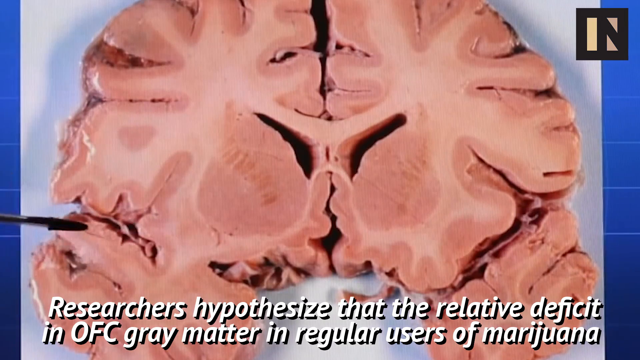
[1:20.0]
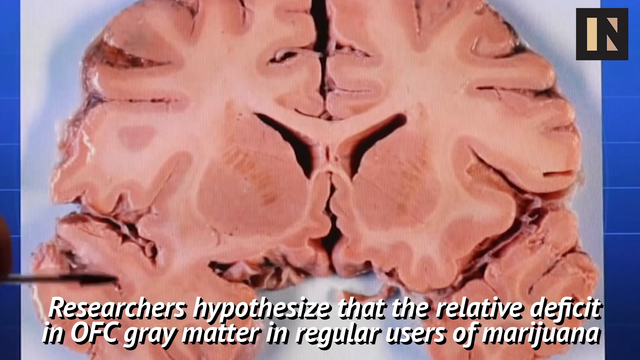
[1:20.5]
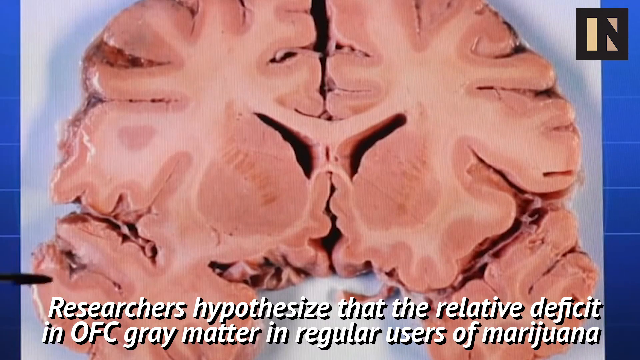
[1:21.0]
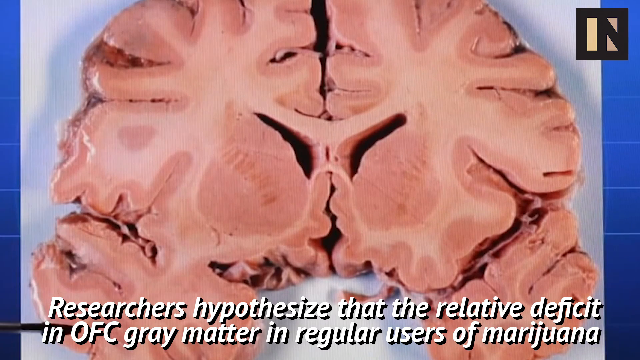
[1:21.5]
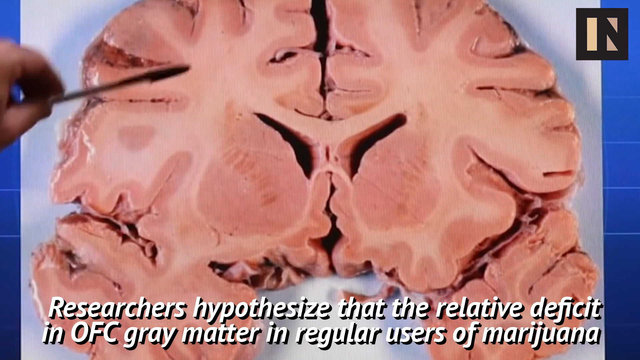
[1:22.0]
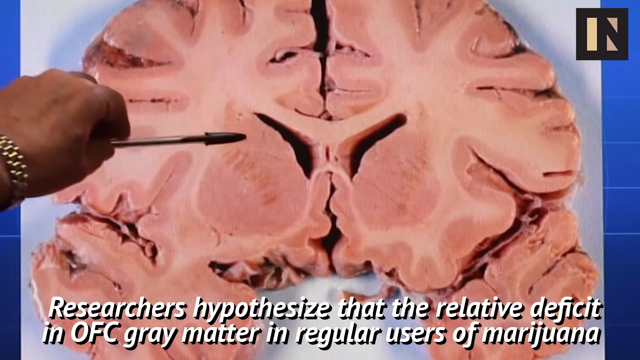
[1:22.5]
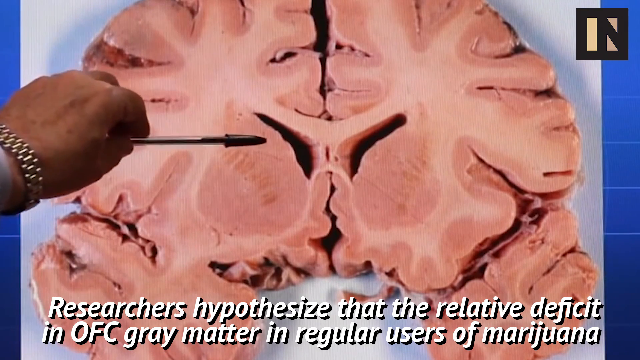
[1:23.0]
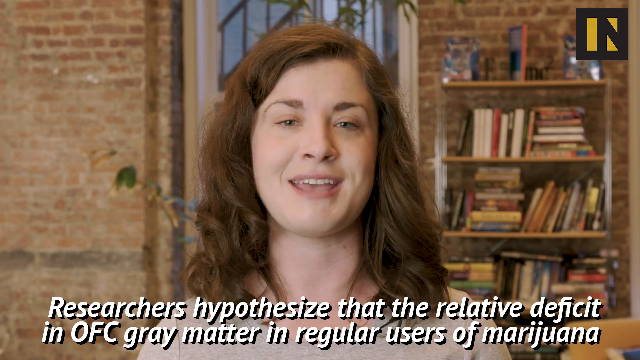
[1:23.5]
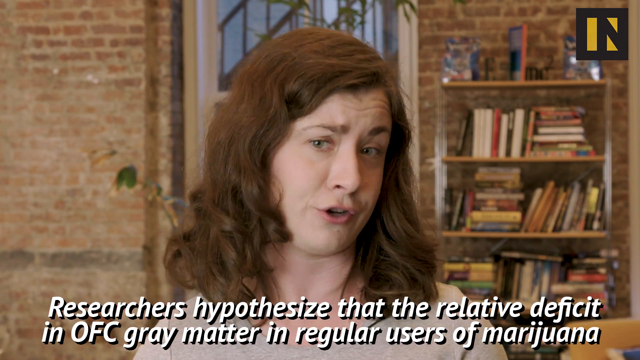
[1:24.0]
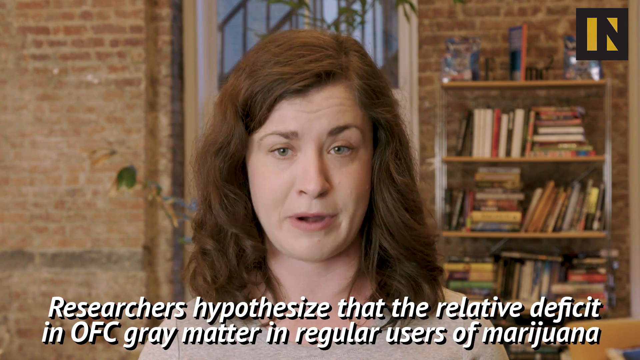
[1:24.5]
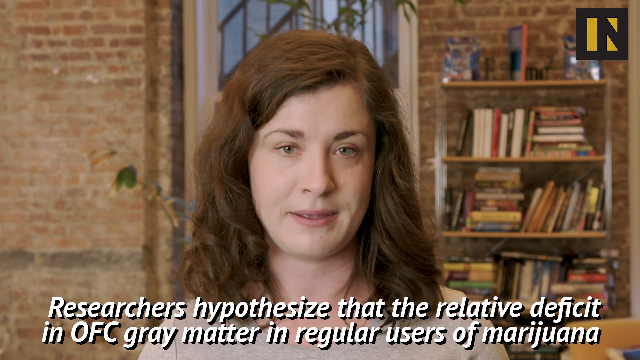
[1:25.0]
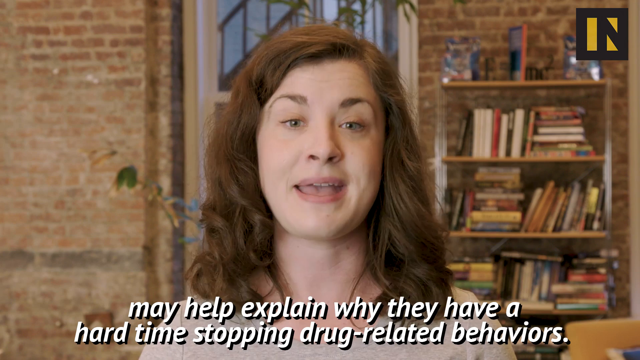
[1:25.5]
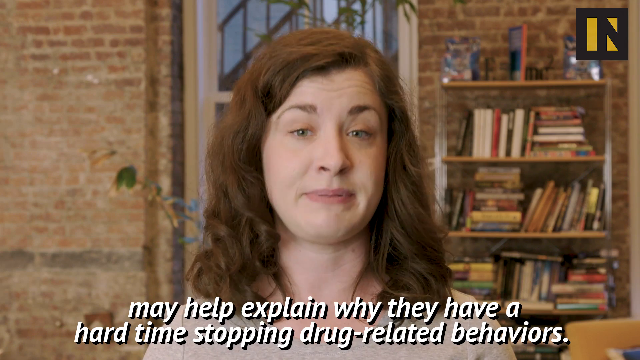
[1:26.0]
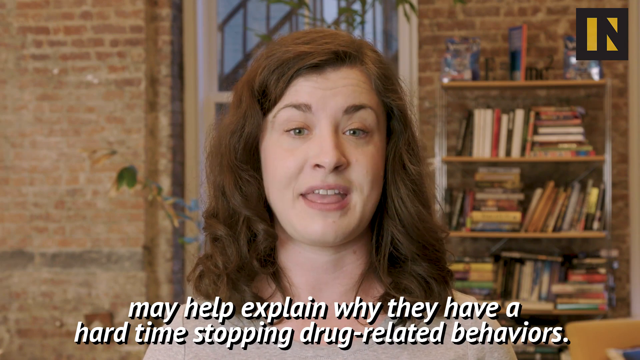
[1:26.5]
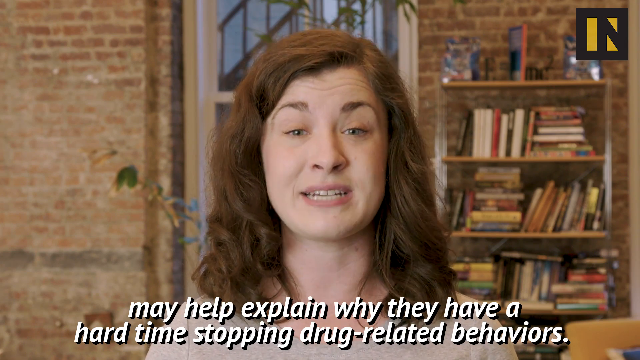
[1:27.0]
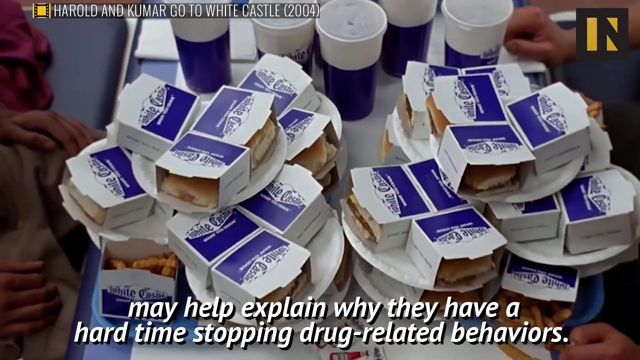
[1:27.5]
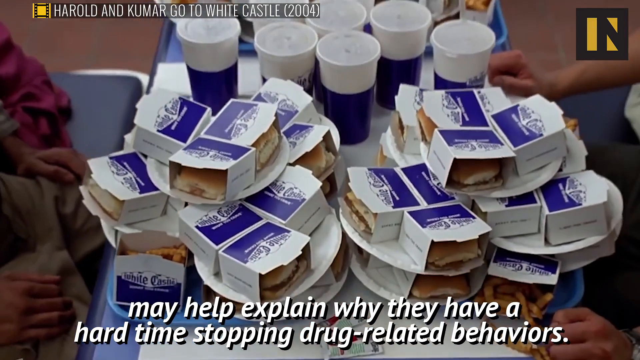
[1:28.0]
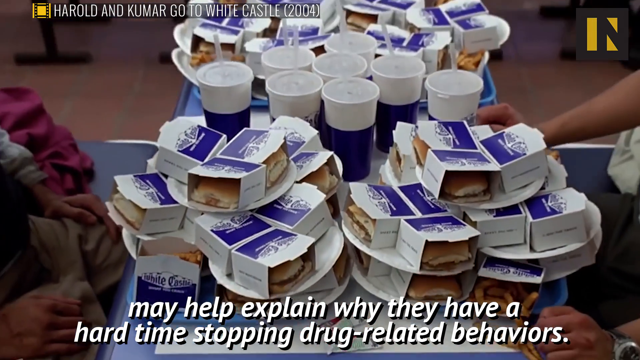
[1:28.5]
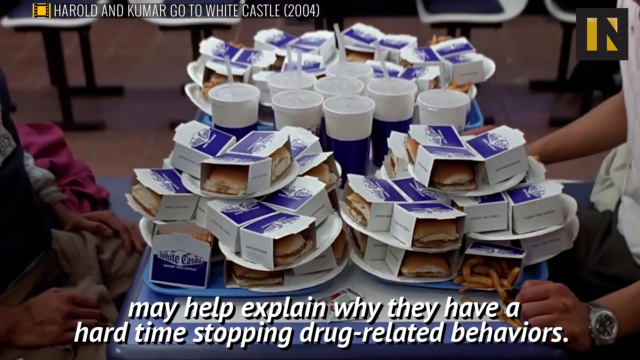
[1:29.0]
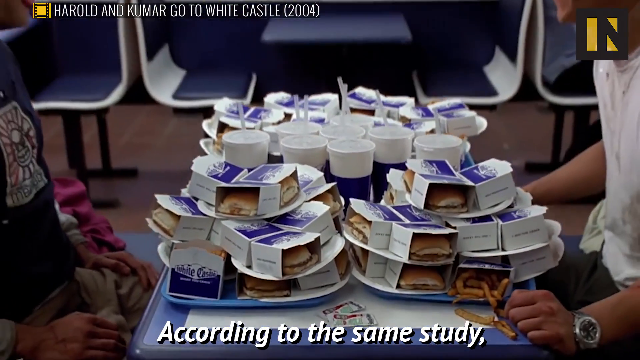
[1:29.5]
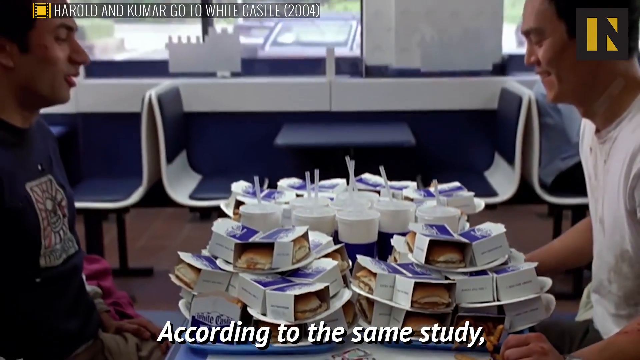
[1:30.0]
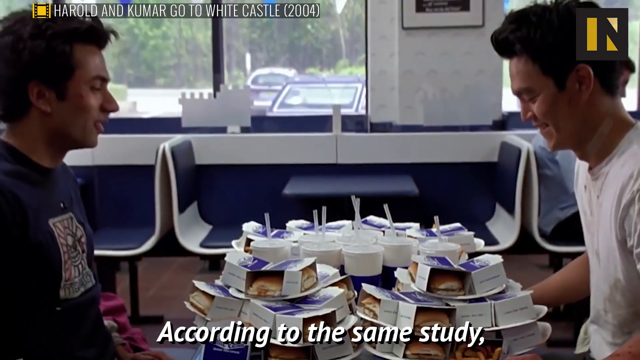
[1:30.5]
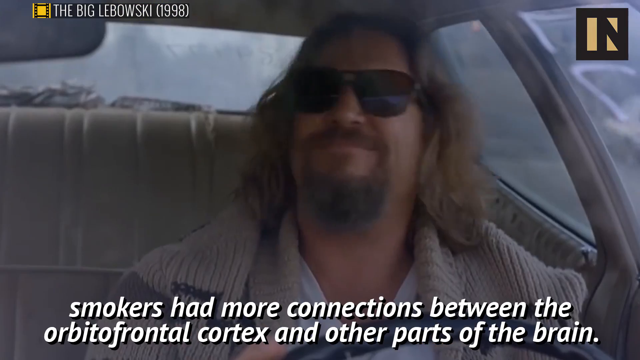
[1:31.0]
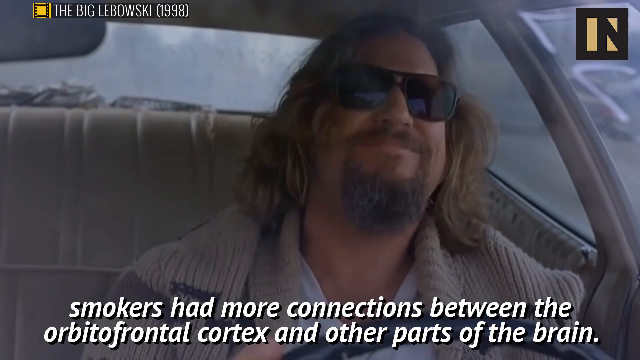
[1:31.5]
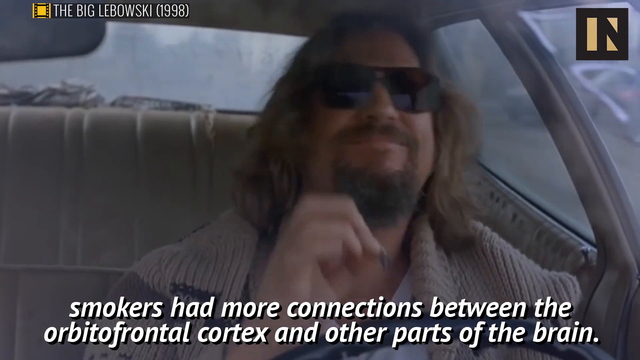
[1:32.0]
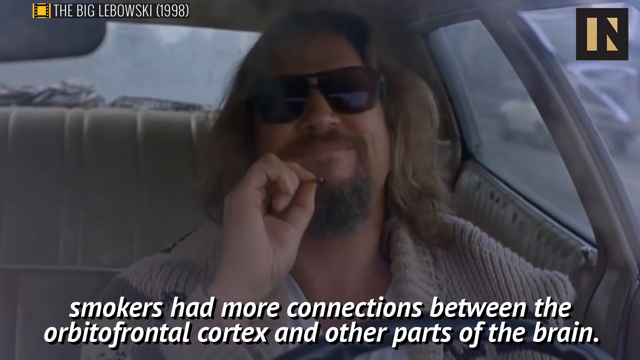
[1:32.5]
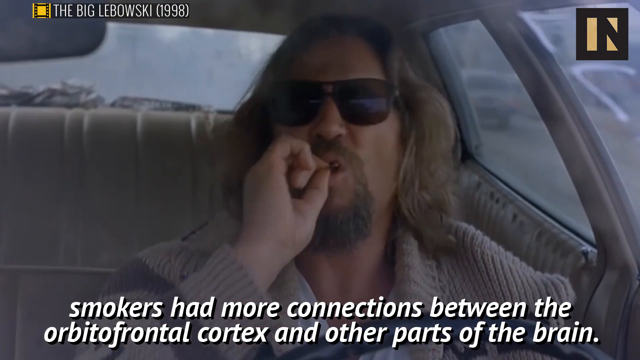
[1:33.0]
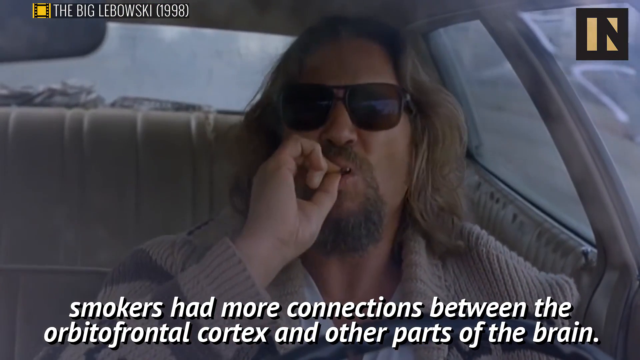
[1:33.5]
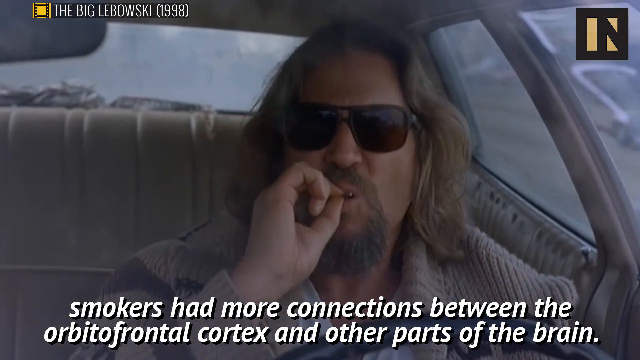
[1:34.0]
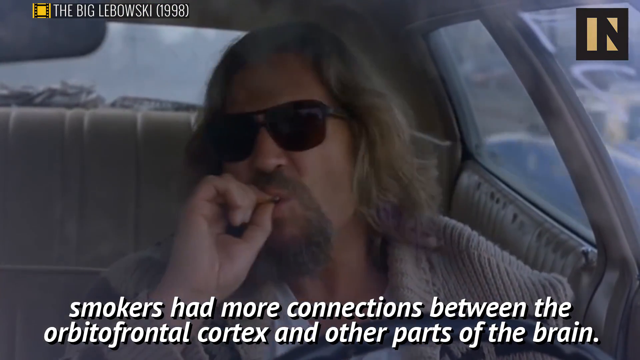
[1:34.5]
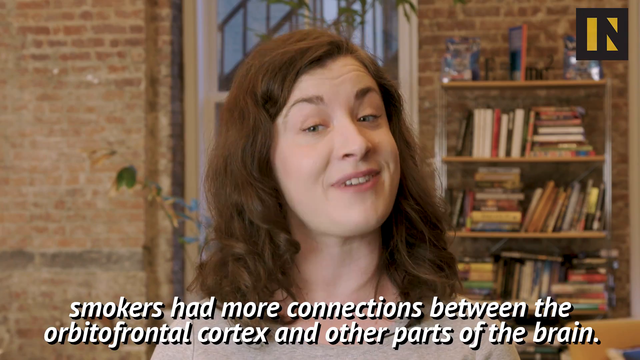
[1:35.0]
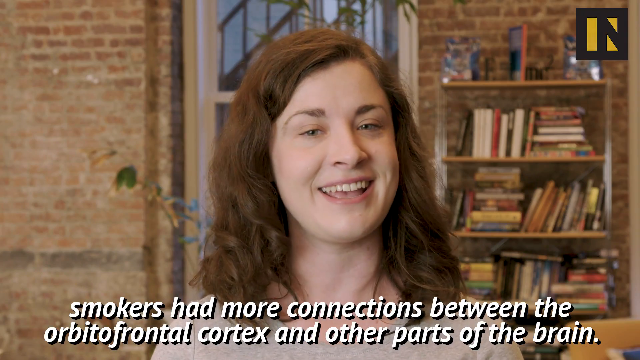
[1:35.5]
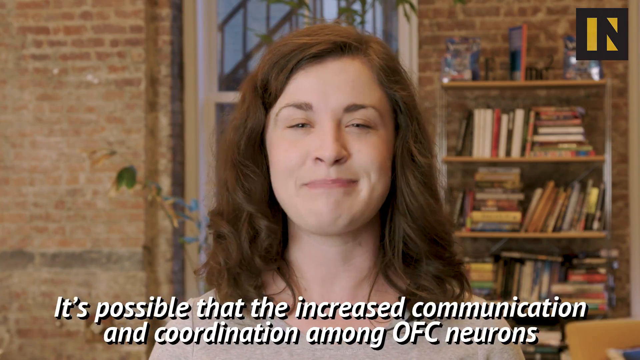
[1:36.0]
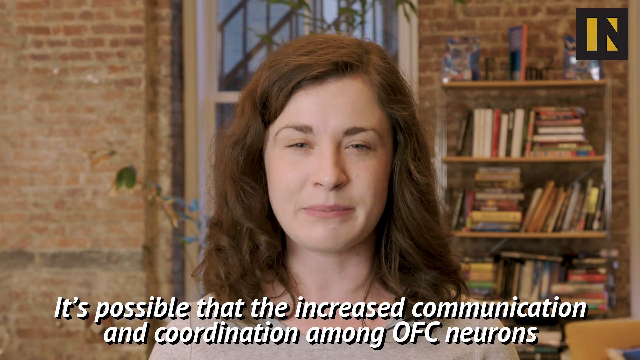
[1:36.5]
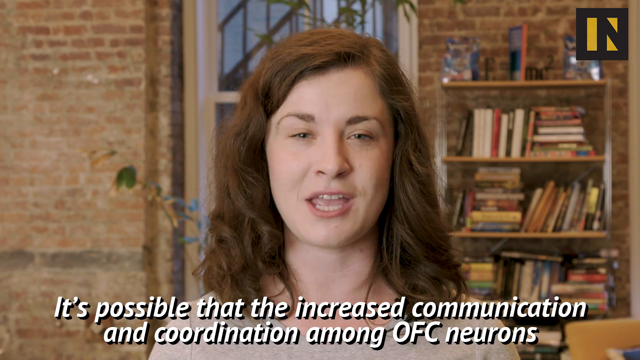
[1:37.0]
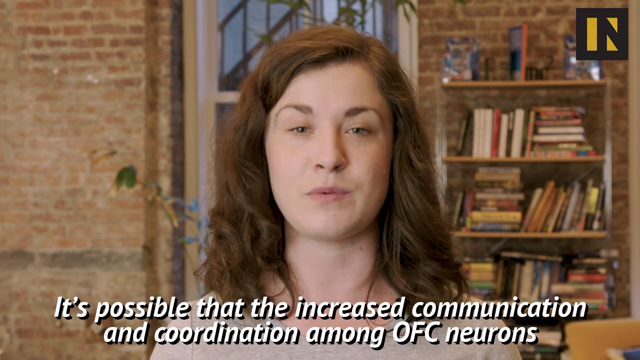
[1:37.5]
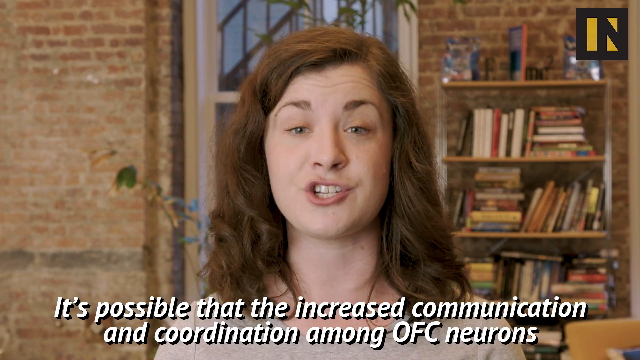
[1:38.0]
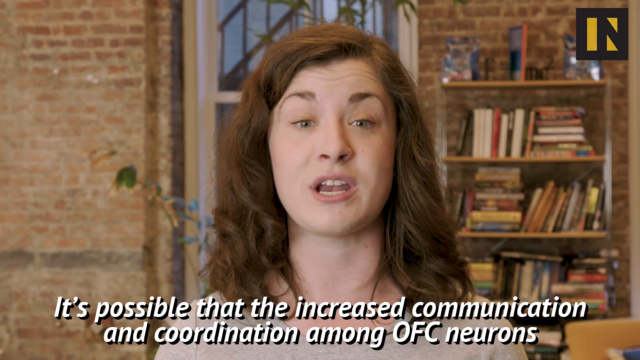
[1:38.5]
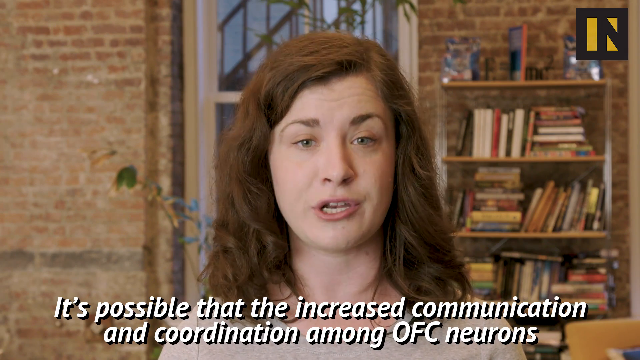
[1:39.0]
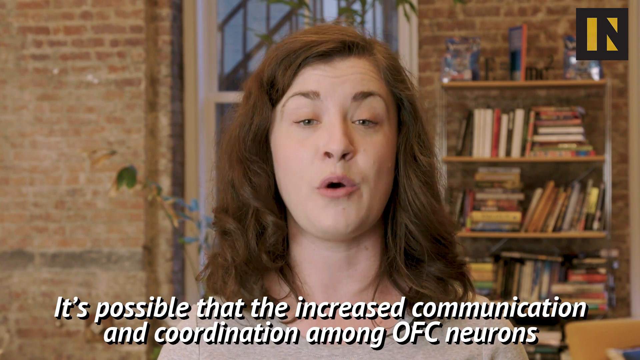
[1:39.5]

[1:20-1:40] A slice of brain is on a white slab against a blue background, and a pen points to different parts of the brain. Subtitles at the bottom read "researchers hypothesize that the relative deficiency of OEC gray matter in regular users of marijuana." The video returns to the girl hosting the show, staring at the camera and talking, with a bookshelf and a brick wall behind her, as subtitles read "may help explain why they have a hard time stopping drug-related behaviors." It switches to a scene from Harold and Kumar Go to White Castle (2004) at the White Castle, where there seem to be about 150 burgers and six sodas on the table between Harold and Kumar. A scene from The Big Lebowski (1998) follows, with the Dude driving down the road. Subtitles read "the smokers have more connections between the orbital frontal cortex and other parts of the brain" and "it's possible that the increased communication and coordination among OEC neurons," and the shot ends with the host facing the camera.